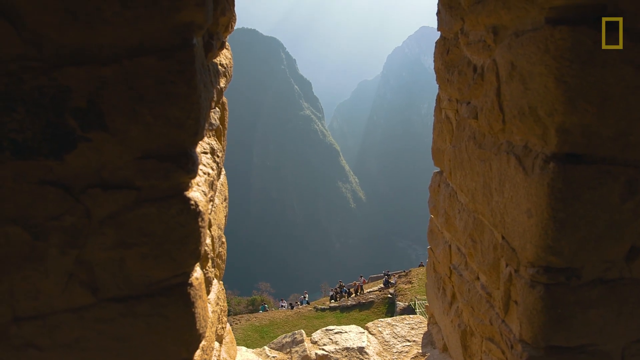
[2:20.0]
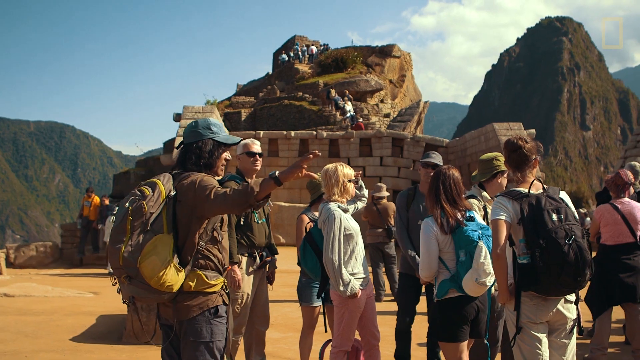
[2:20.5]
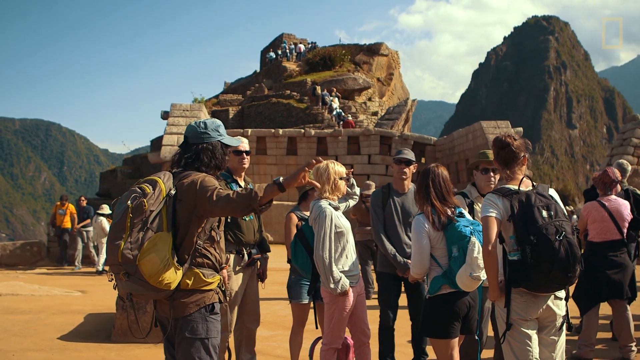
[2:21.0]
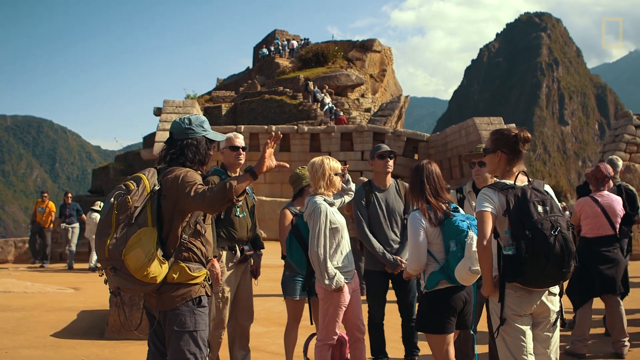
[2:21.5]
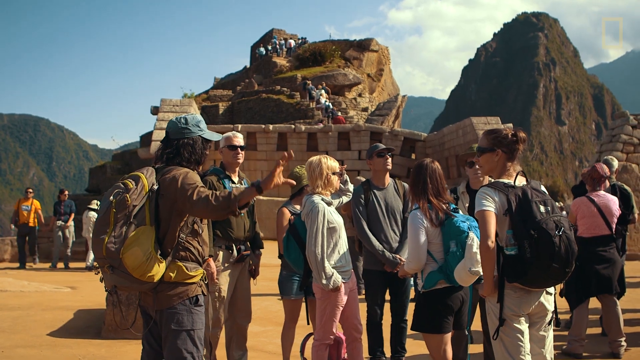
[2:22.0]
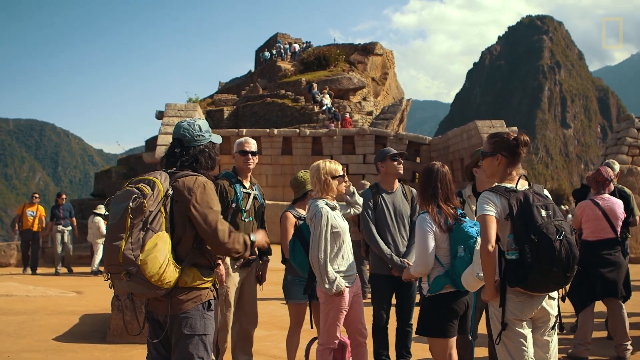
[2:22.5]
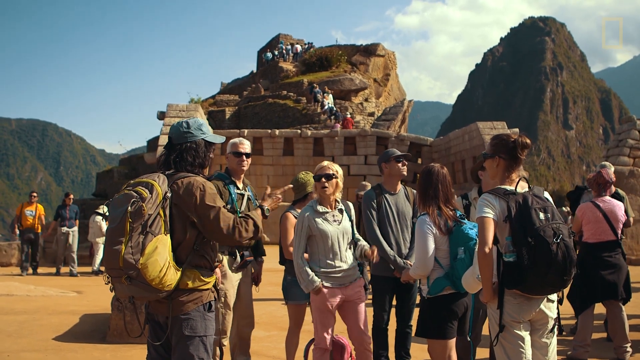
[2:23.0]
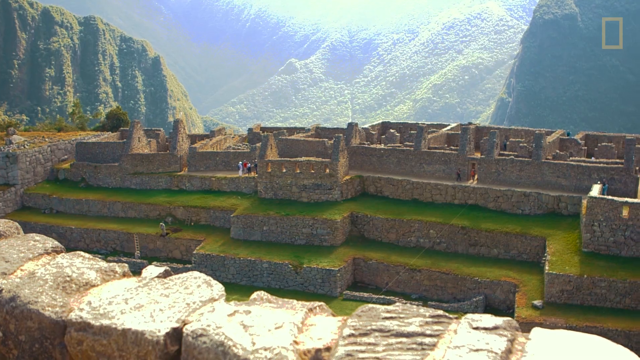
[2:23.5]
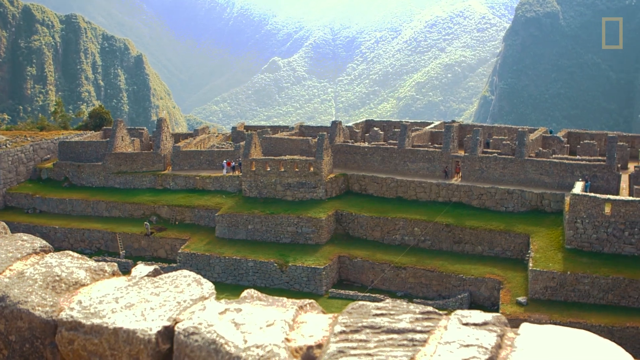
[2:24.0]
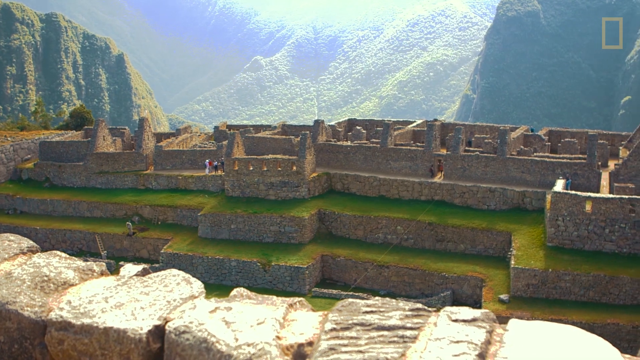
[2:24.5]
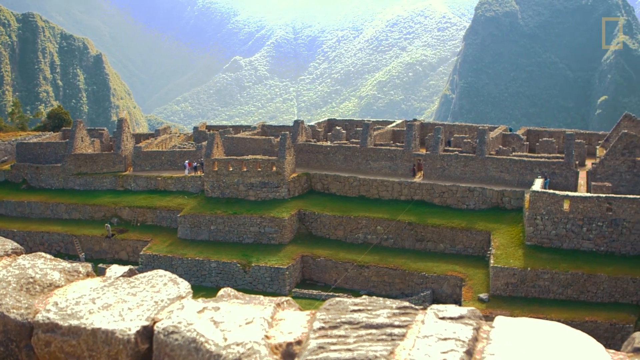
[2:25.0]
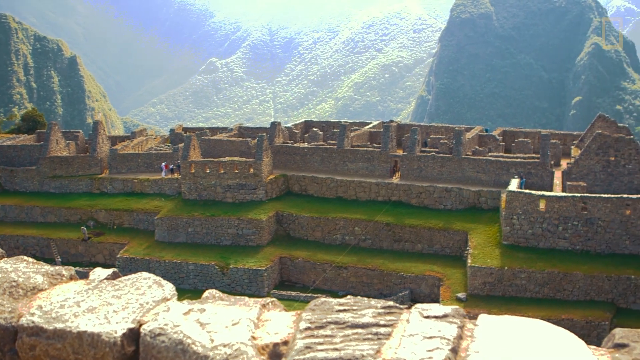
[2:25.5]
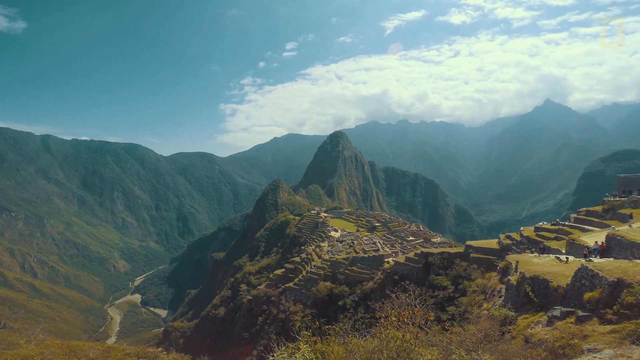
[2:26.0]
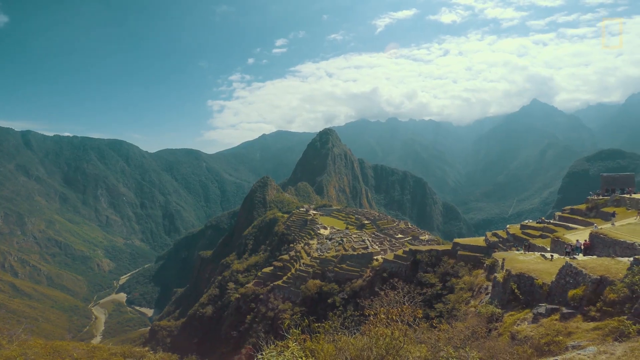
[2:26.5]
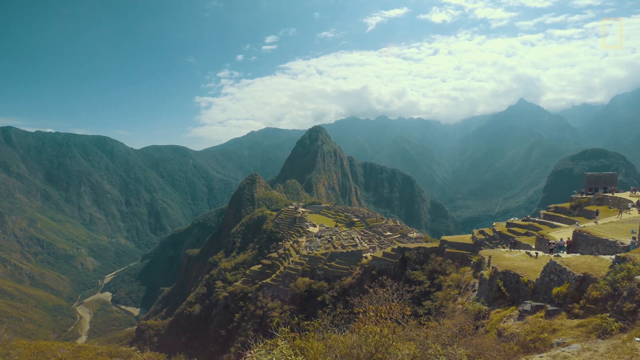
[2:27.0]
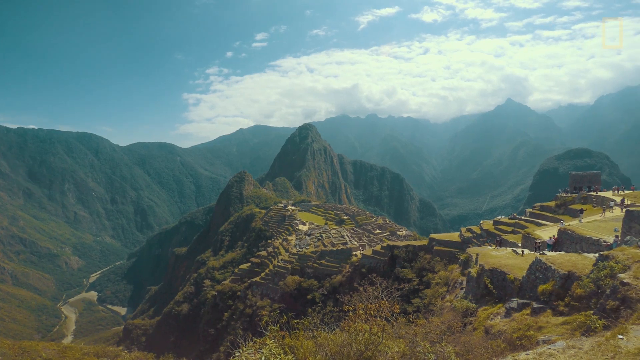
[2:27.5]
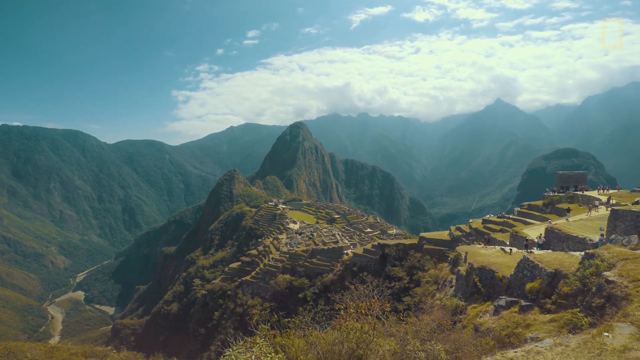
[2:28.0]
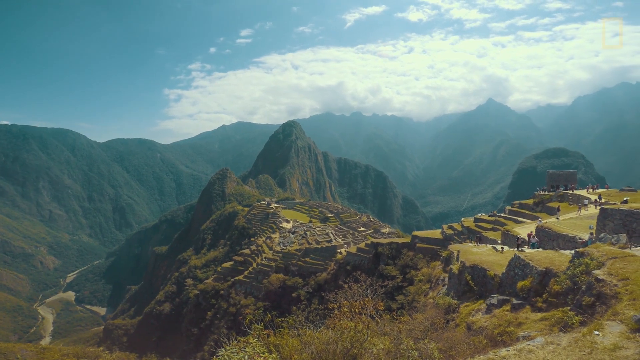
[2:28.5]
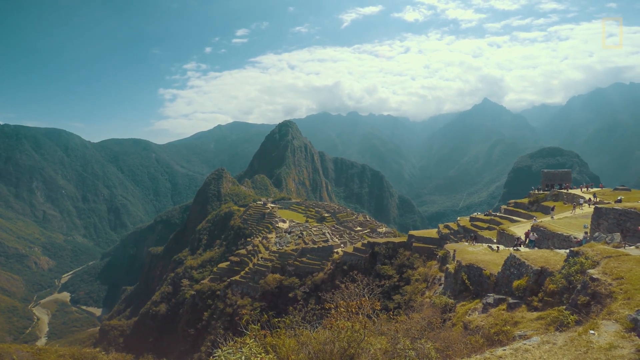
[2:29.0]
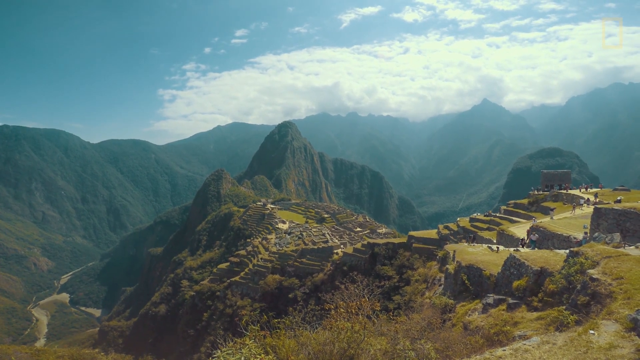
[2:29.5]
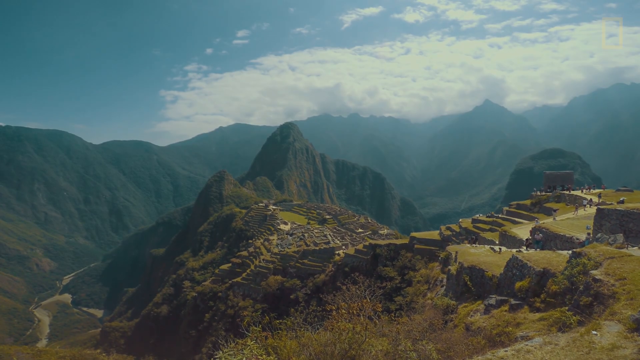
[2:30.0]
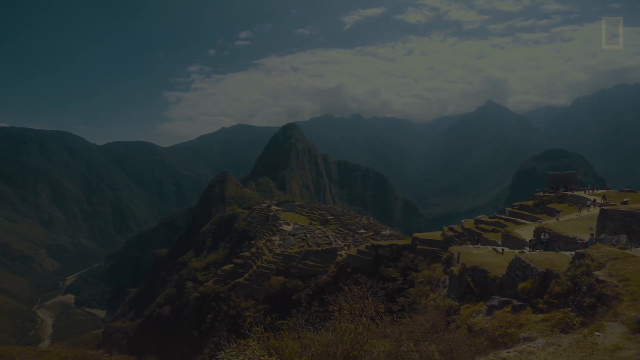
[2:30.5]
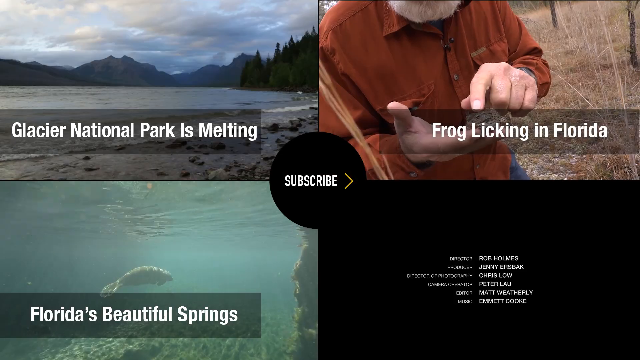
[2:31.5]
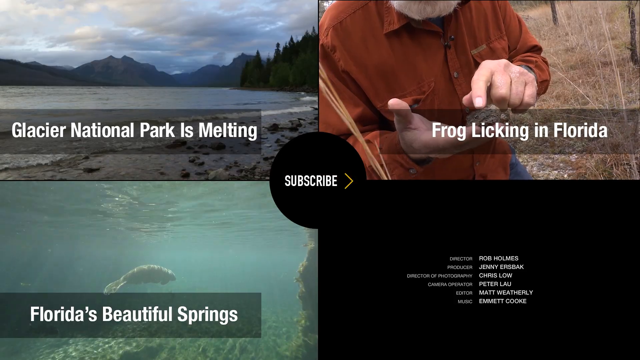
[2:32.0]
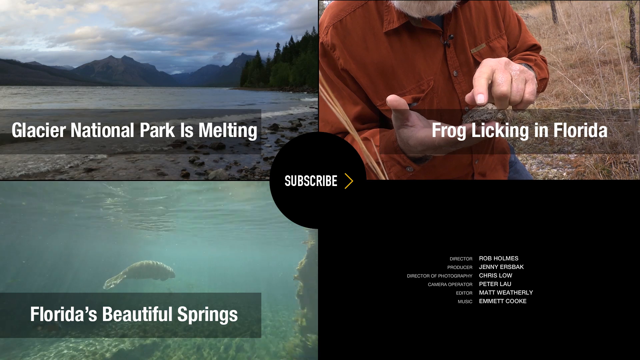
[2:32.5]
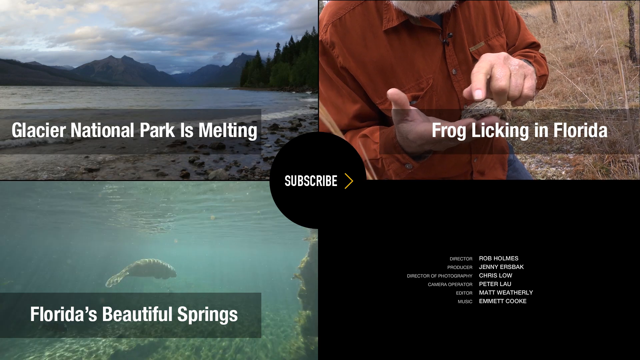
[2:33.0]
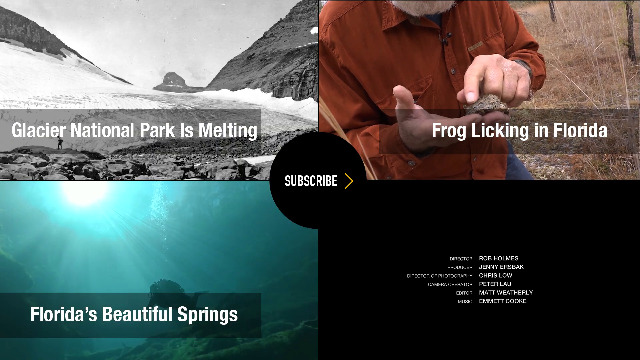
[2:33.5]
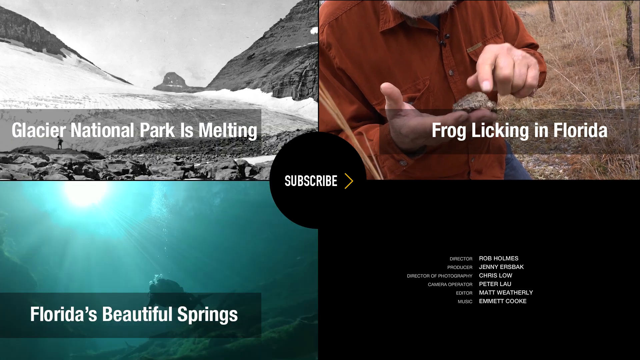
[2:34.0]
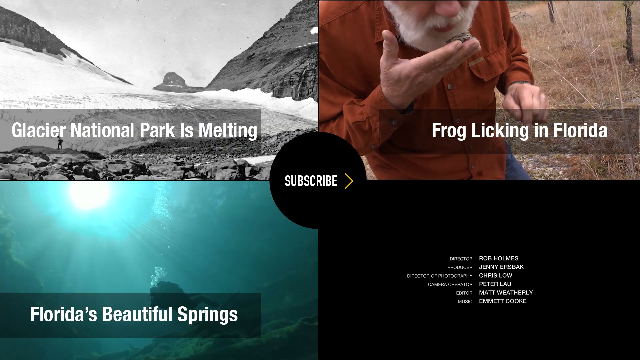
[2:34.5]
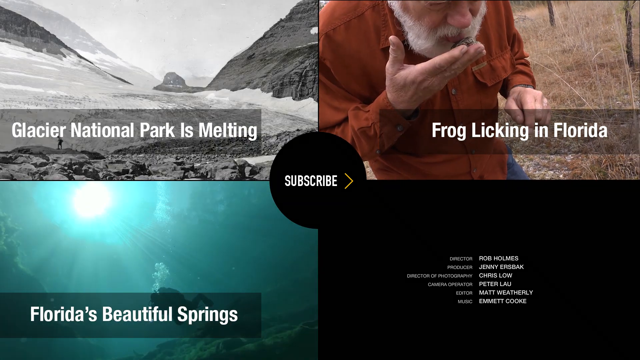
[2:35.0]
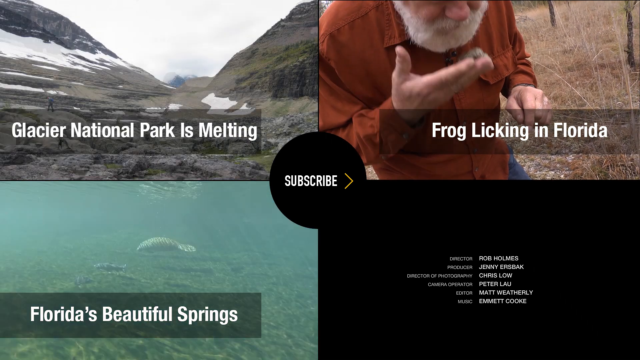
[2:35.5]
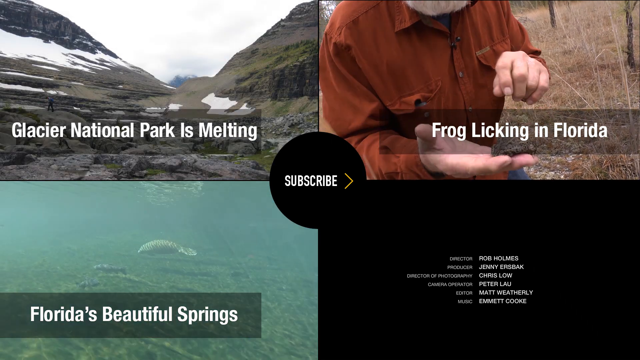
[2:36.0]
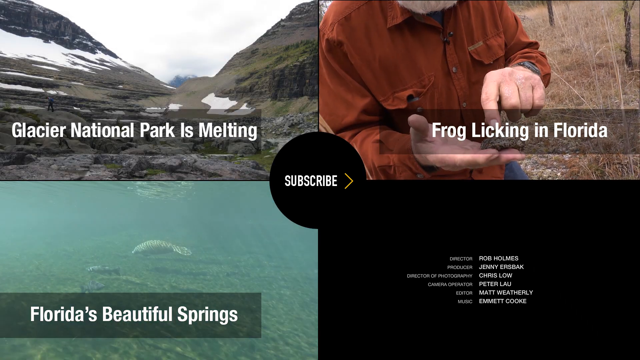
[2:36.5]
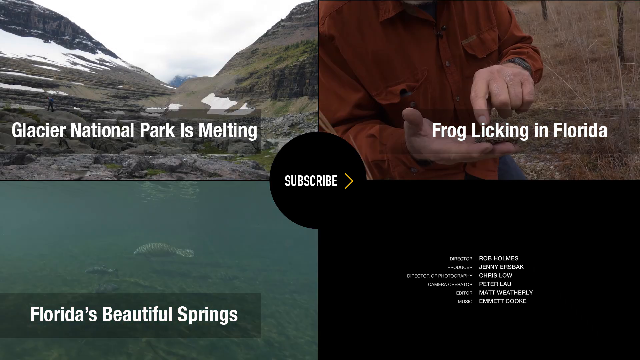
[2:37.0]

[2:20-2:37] A group of people stand at Machu Picchu on what is kind of a little plaza, talking and pointing out different places. Some have backpacks on, some wear hats, some have coats and some don't, and some wear sunglasses. The monolith and stone walls are visible in the background. The view pans out to show, below them, the graduated terraces held up by rock walls, green grass growing there, the stonework, and buildings; some of the walls have windows set at certain distances. Then, from a higher place in Machu Picchu, the view looks back across and down over more stone, the plateau, and the valleys behind.